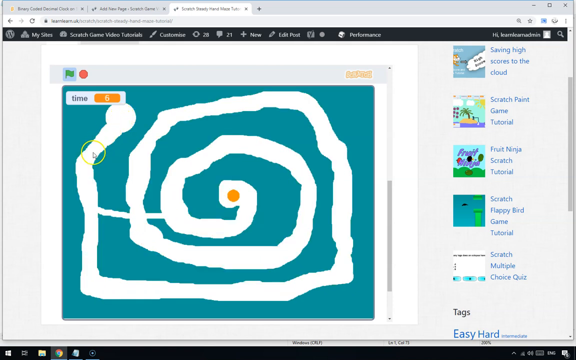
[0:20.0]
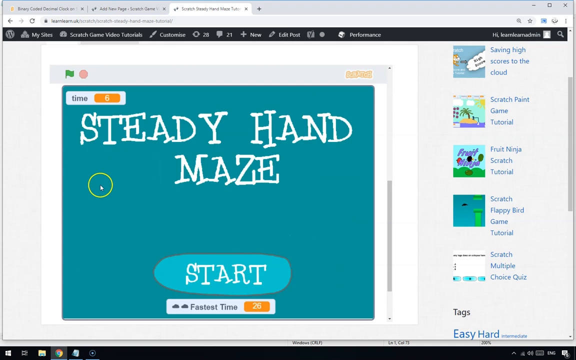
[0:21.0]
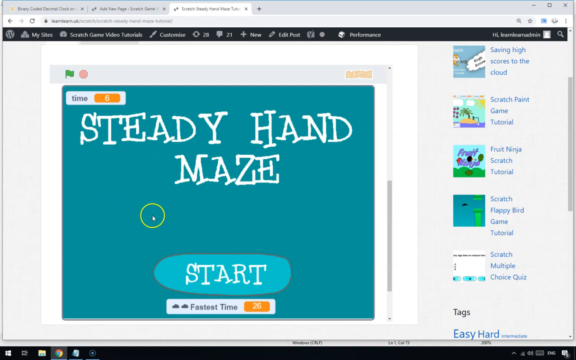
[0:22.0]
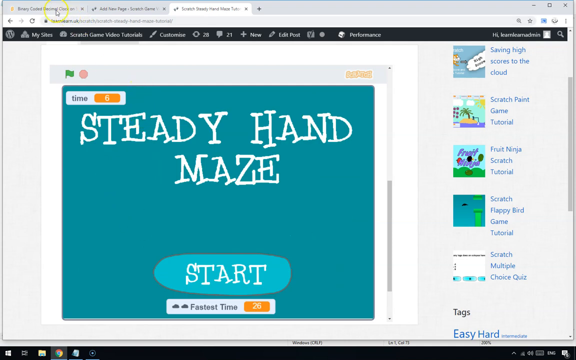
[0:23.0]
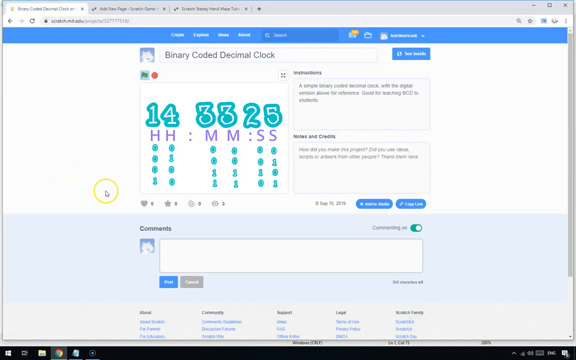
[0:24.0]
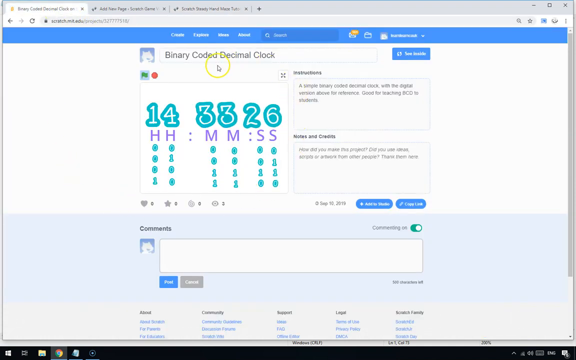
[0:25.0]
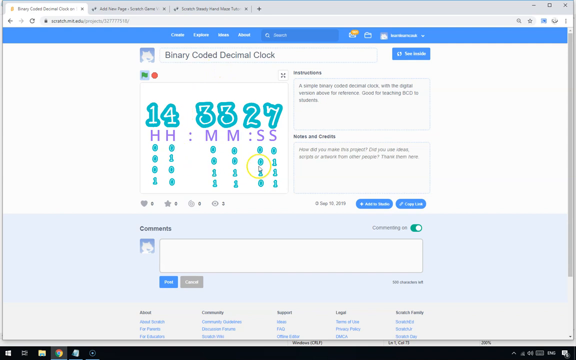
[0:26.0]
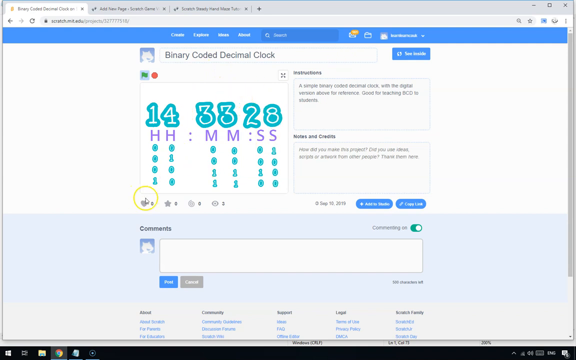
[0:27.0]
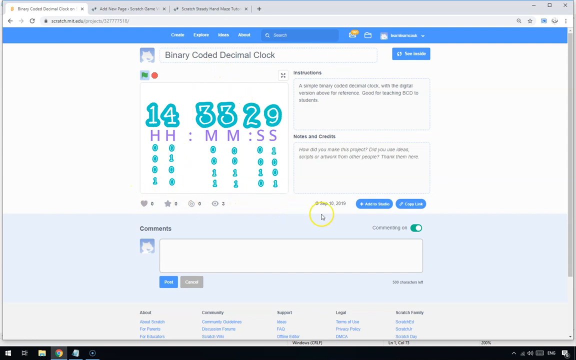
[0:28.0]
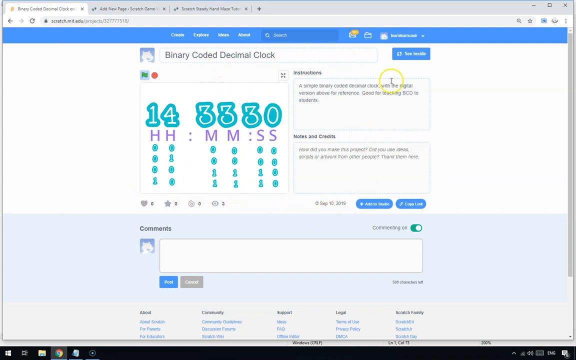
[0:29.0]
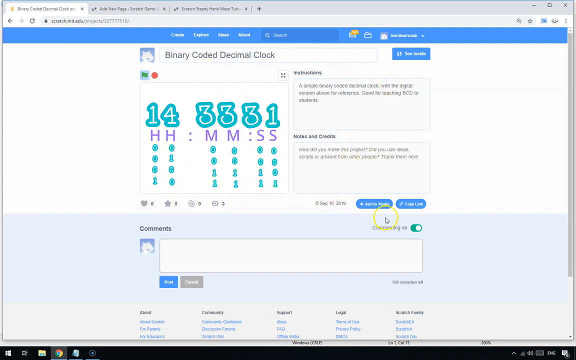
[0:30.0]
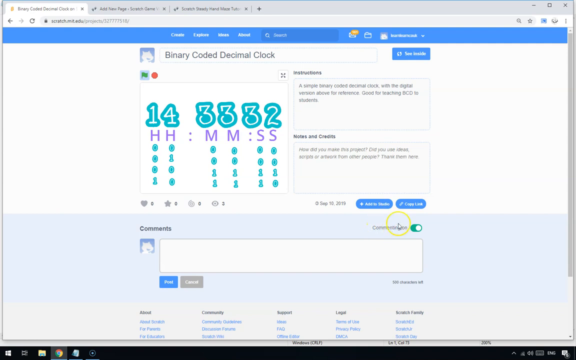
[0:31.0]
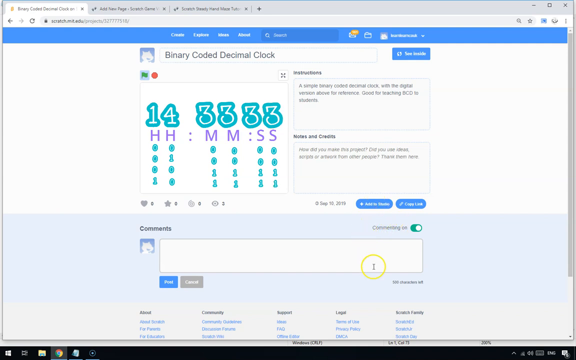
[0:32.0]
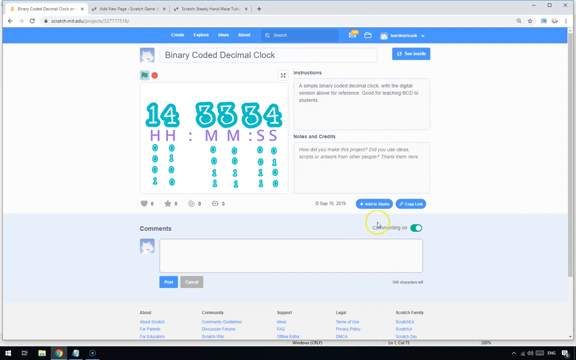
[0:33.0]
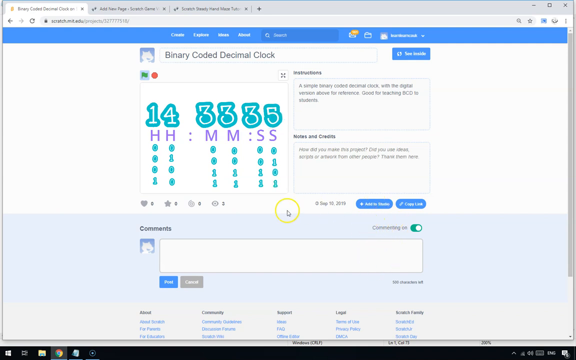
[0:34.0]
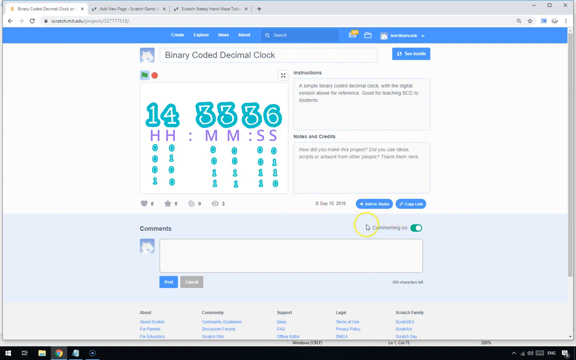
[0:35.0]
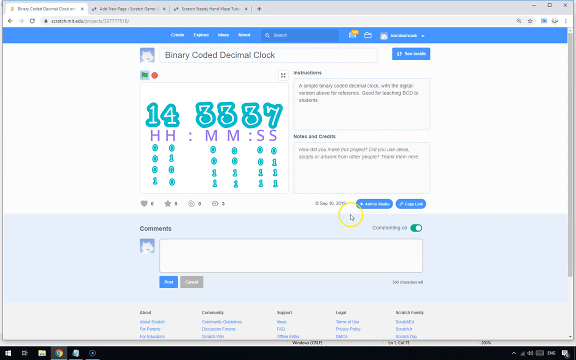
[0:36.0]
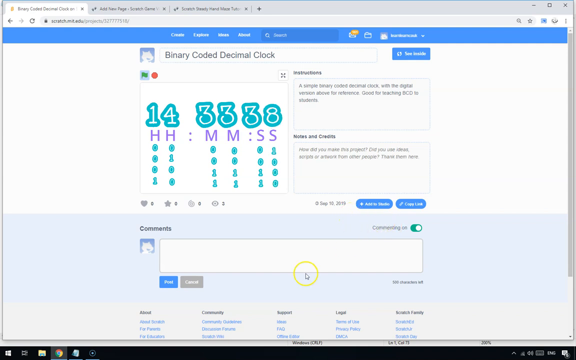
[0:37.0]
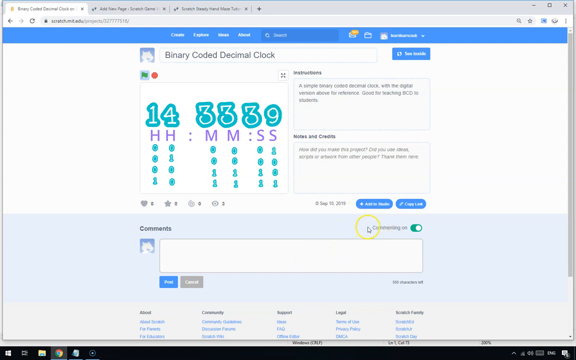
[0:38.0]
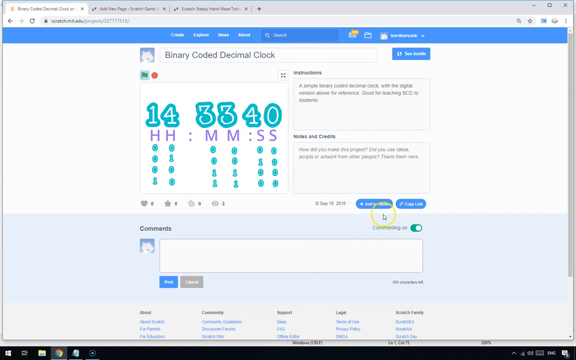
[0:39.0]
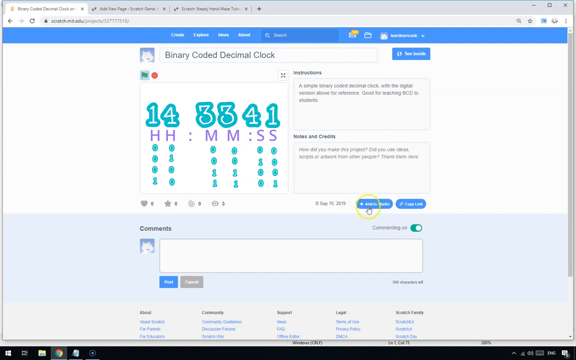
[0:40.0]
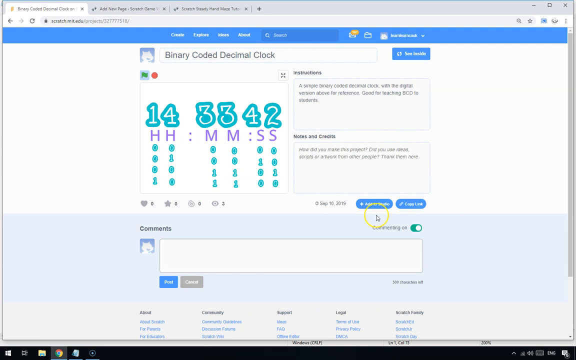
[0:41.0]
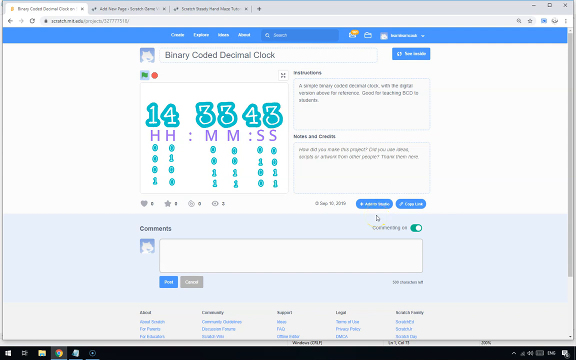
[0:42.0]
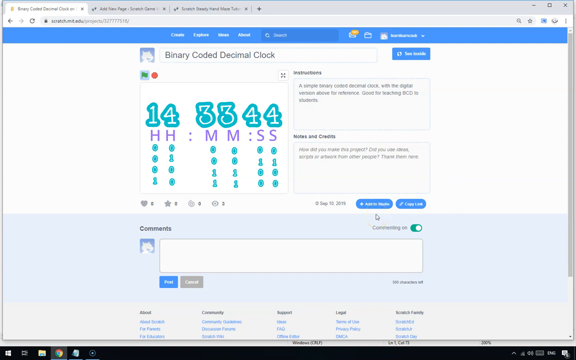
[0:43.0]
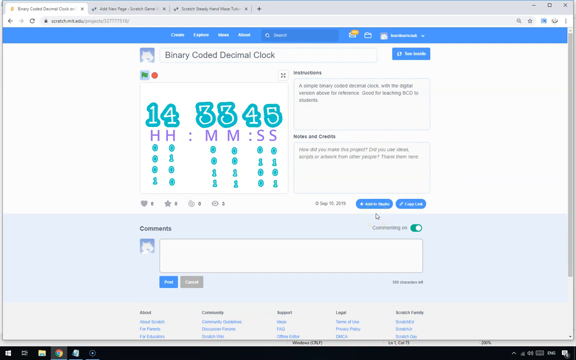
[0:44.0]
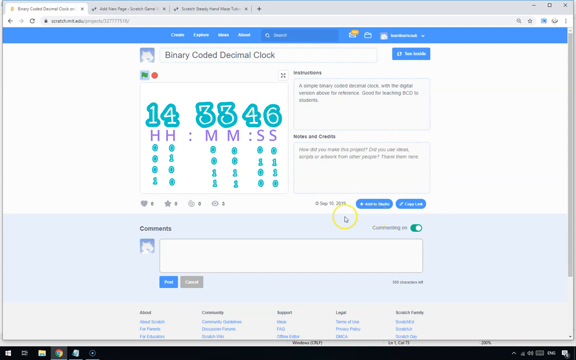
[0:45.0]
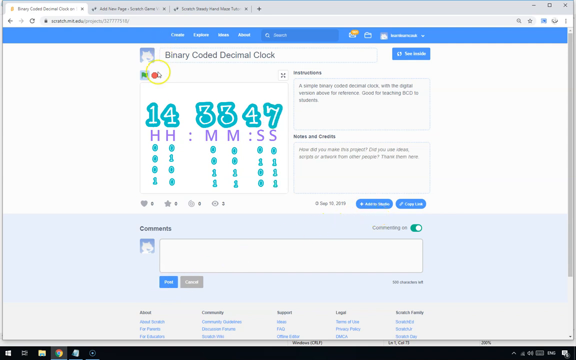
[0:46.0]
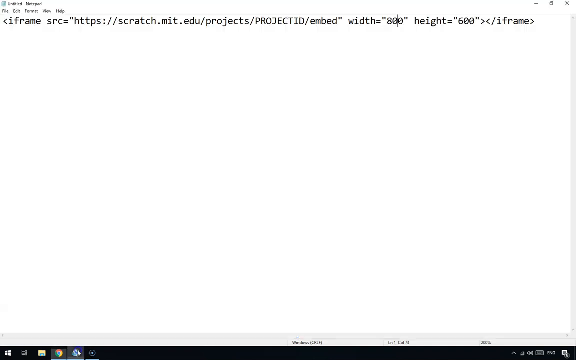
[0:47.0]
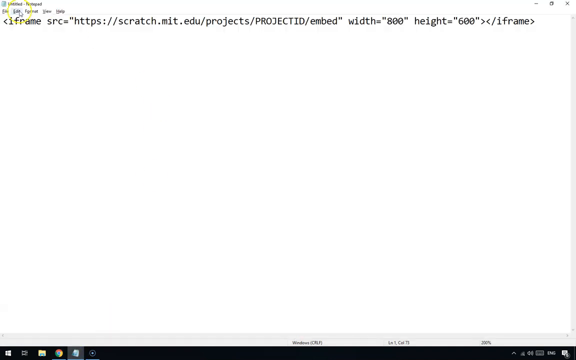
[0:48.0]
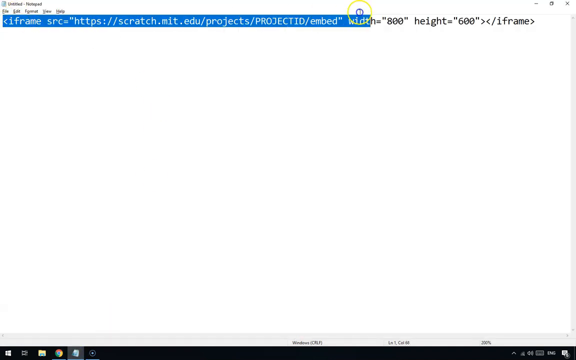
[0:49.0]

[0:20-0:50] The view returns to the main screen and the cursor moves up. A different tab is open, titled binary coded decimal clock, with a cat logo at the top. Numbers are laid out by hour, minute and seconds, with what looks like notes on the right side and comments below. The cursor moves over the time as the seconds change, then circles around different blue buttons to add a comment or add a sticker, then circles the commenting area below, which is green, and points to the seconds. The screen is blurry and hard to read. Something at the bottom of the screen is clicked, and Notepad opens showing a file path, which is highlighted.